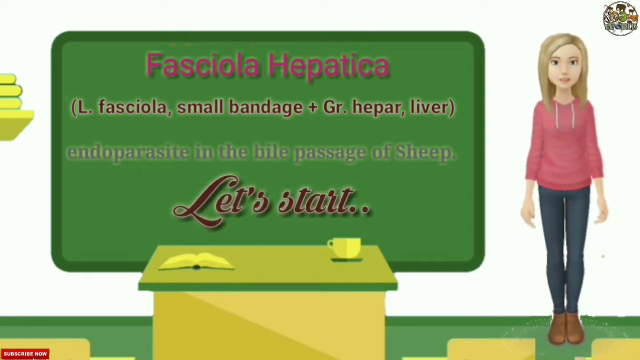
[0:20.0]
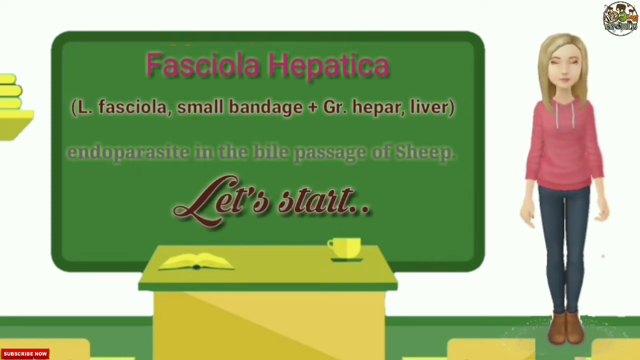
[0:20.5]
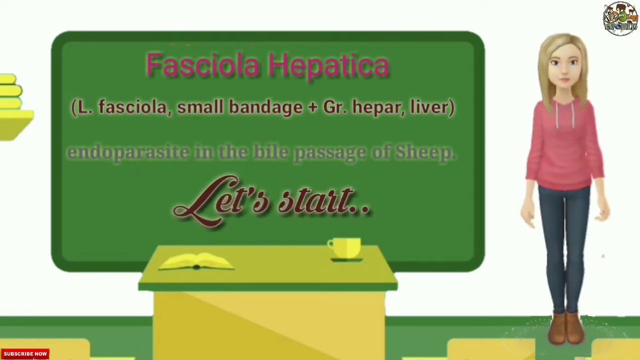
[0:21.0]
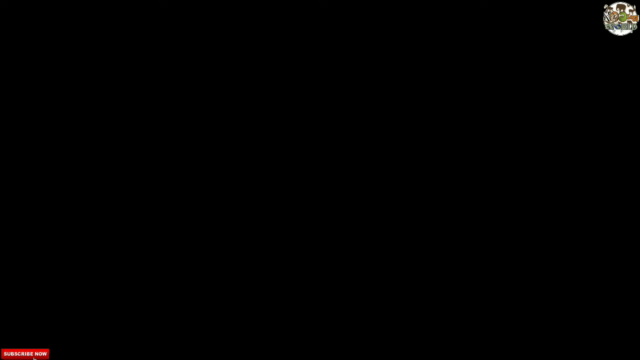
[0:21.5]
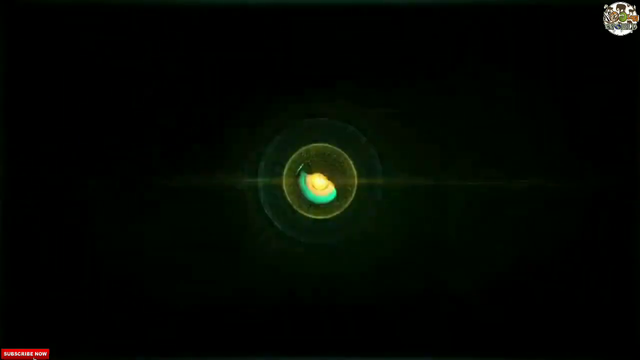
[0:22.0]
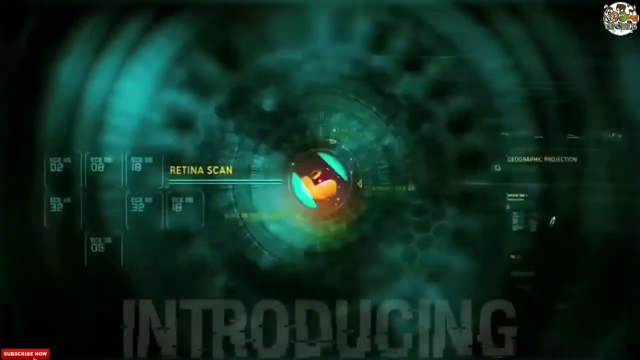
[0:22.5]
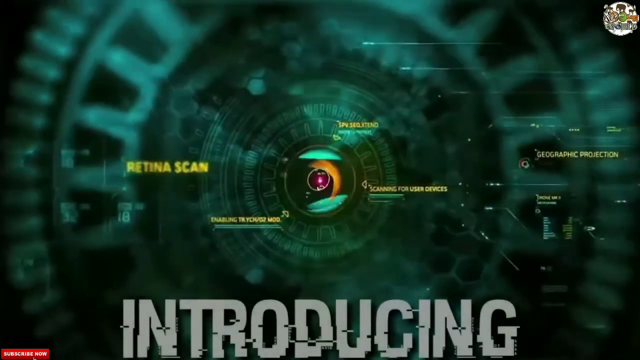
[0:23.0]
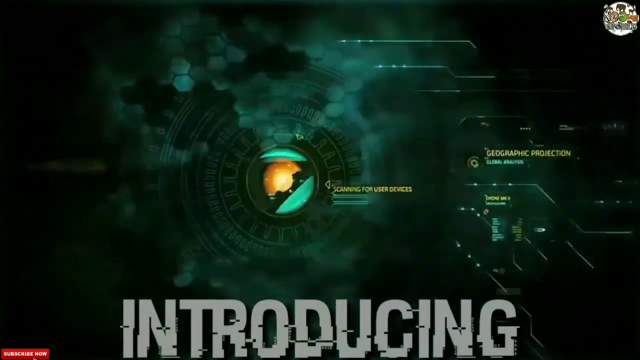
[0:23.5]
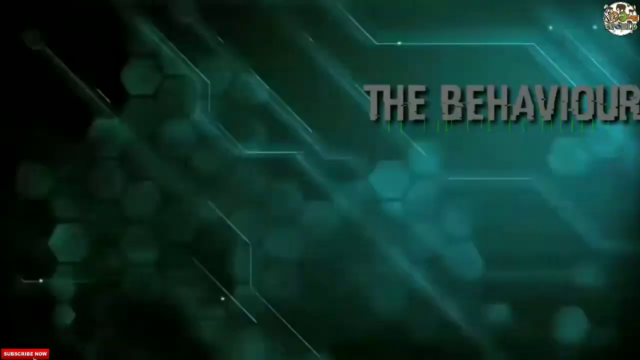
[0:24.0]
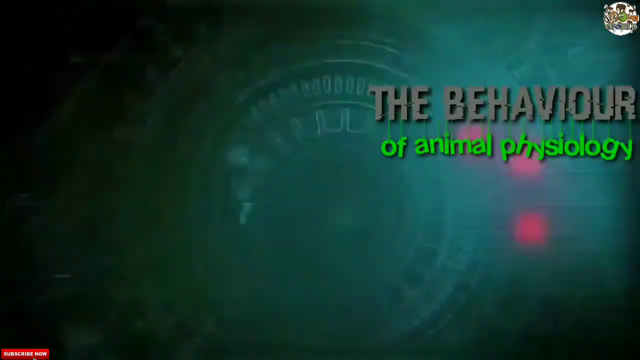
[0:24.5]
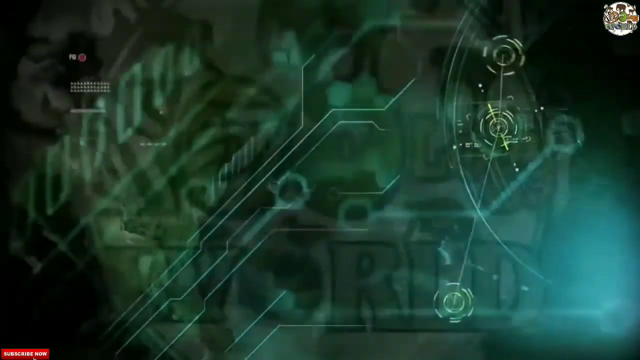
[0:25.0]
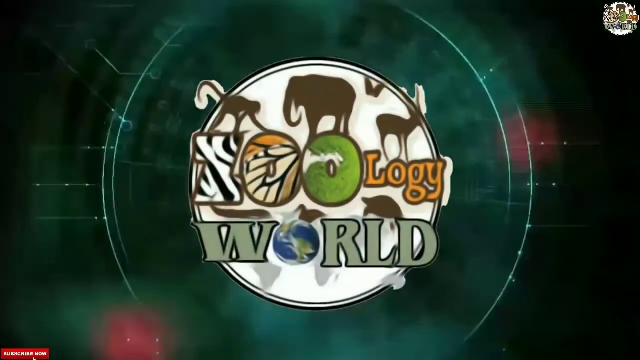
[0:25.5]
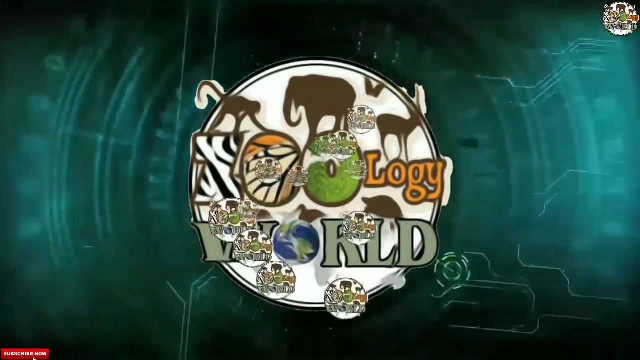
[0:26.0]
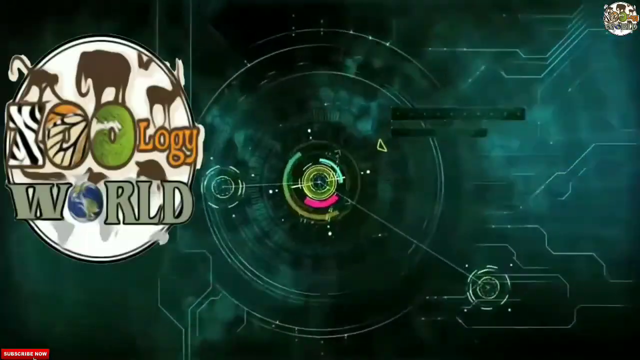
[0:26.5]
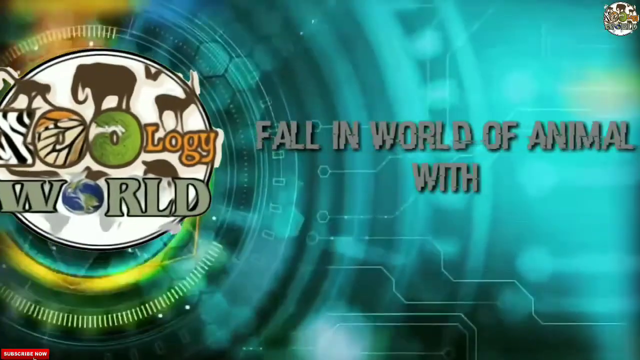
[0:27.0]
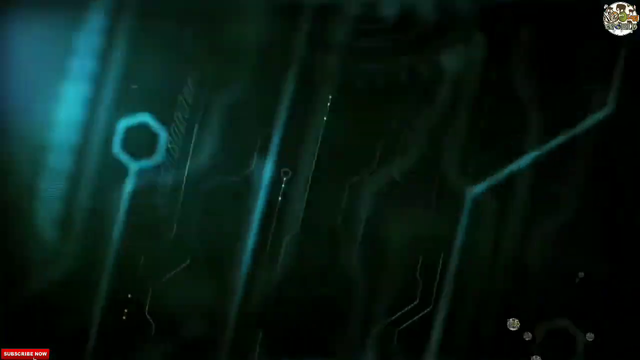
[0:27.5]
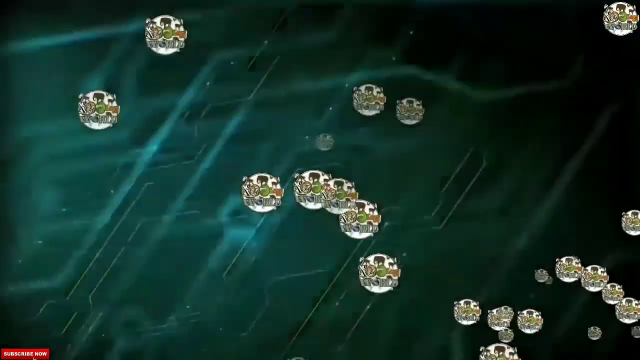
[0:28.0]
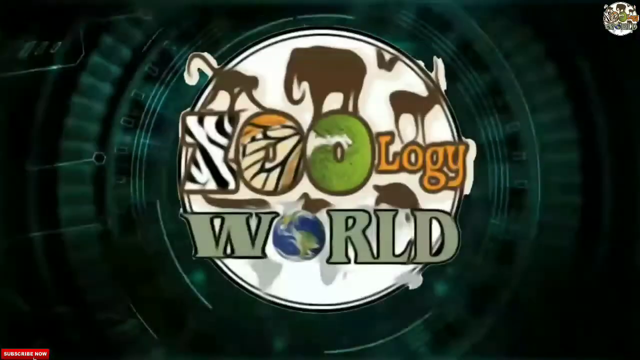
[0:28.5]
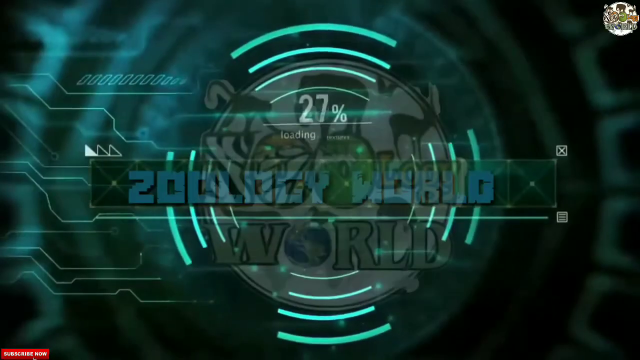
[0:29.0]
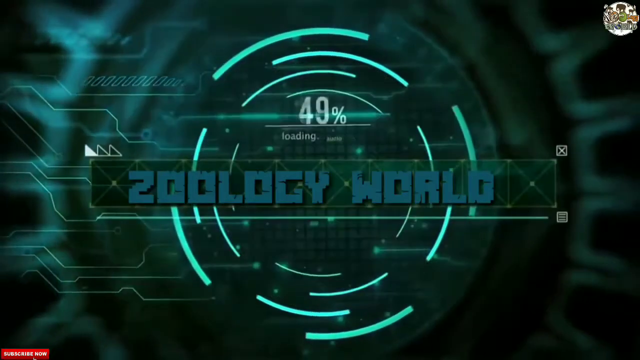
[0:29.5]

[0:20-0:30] The scene fades to black and a bright yellow light flashes horizontally across the screen. A dramatic opening cutscene follows, with cybernetic elements displayed and transitioning until the phrase "behavior of animal psychology" appears briefly on the right side of the screen. The background has cybernetic accents with a dark, kind of blue-greenish theme. The opening credits end with the Zoology World logo in the center of the screen. The letters of "Zoology" contain the patterns and skins of different animals: the Z has zebra markings, the first O has a sort of butterfly pattern, and the second O is green like grass. The O in "World", below "Zoology", is a globe of the planet Earth. The logo then moves to the left side of the screen while the phrase "All in World of Animal Worth" appears on the right. A loading screen briefly appears, showing the Zoology World logo in a sort of pixelated style that matches the cybernetic theme of the background.